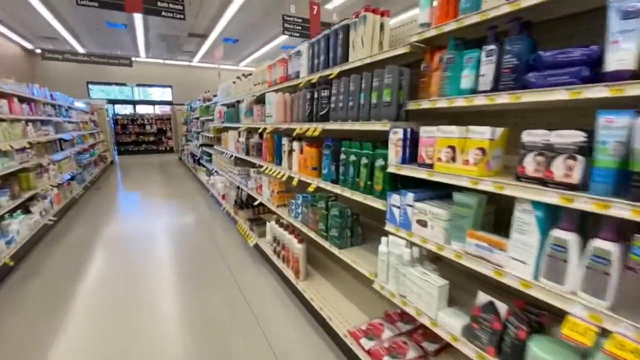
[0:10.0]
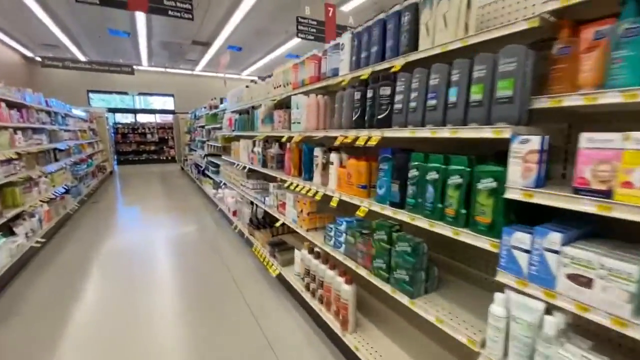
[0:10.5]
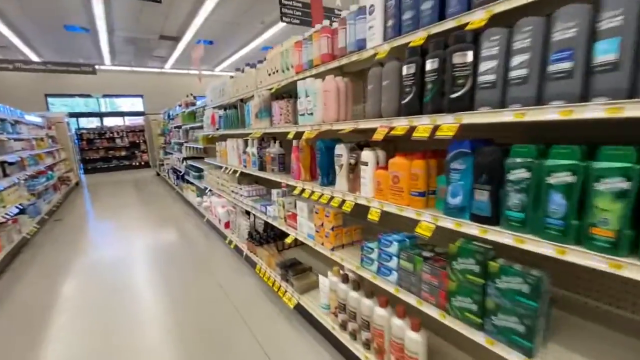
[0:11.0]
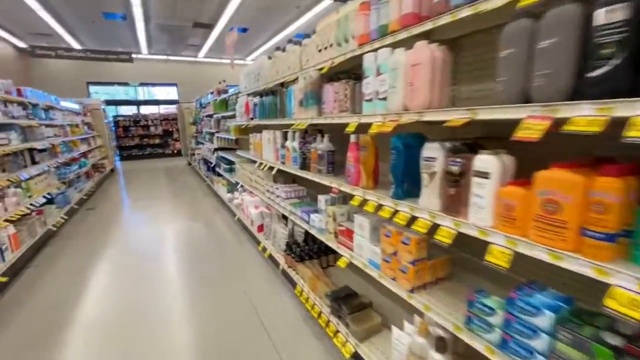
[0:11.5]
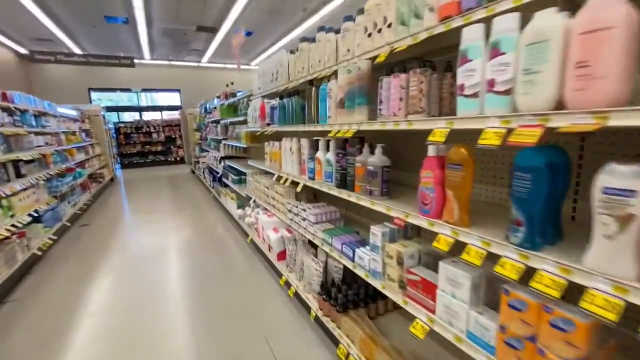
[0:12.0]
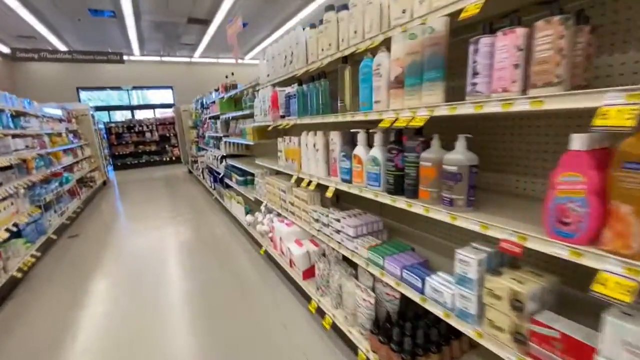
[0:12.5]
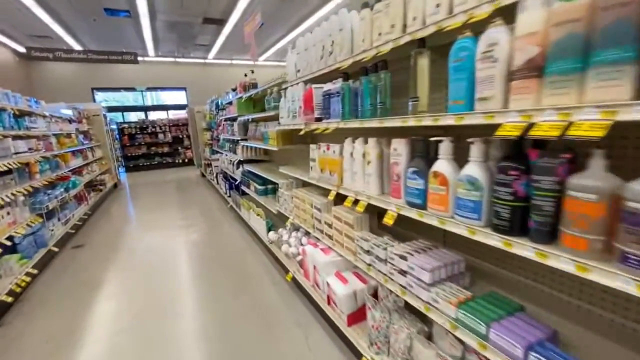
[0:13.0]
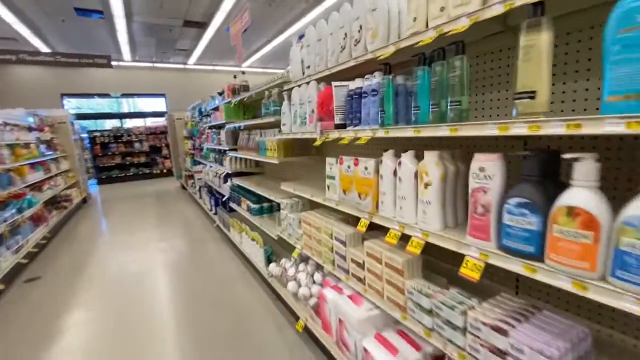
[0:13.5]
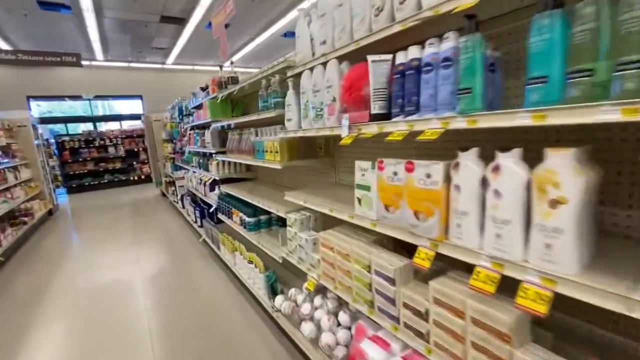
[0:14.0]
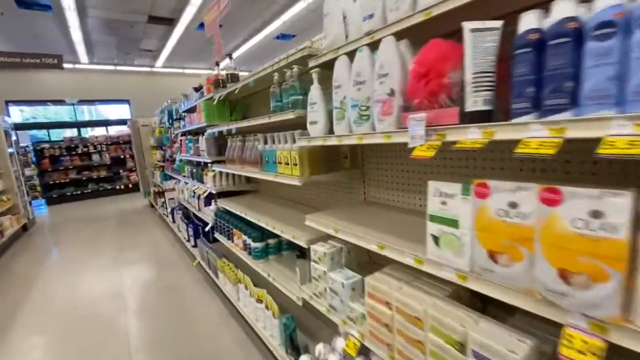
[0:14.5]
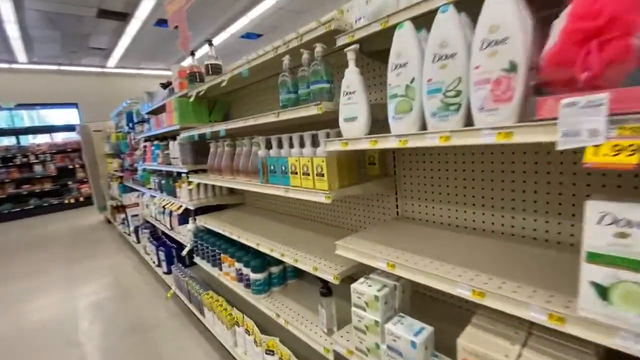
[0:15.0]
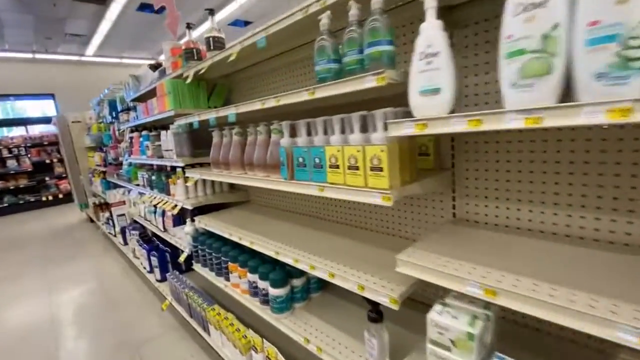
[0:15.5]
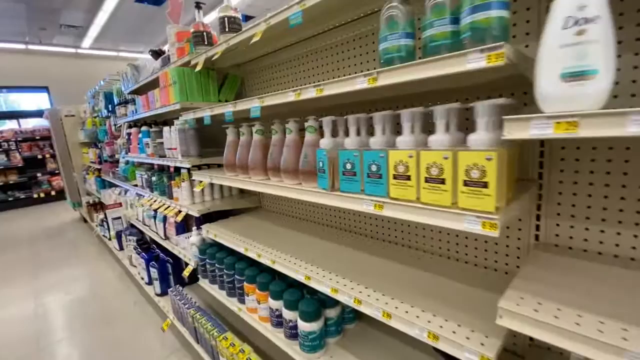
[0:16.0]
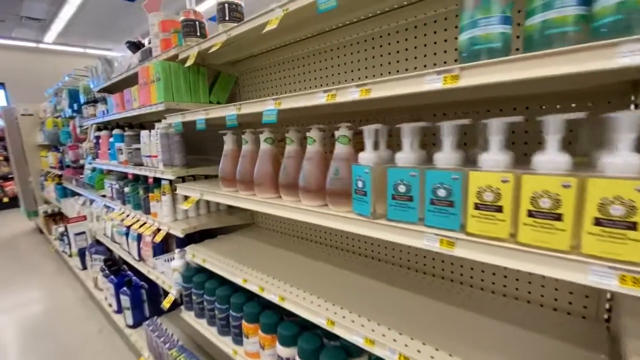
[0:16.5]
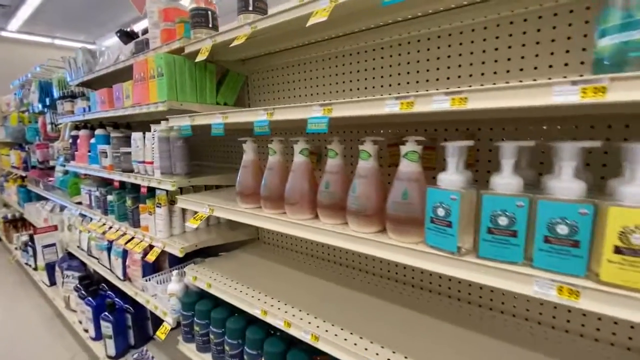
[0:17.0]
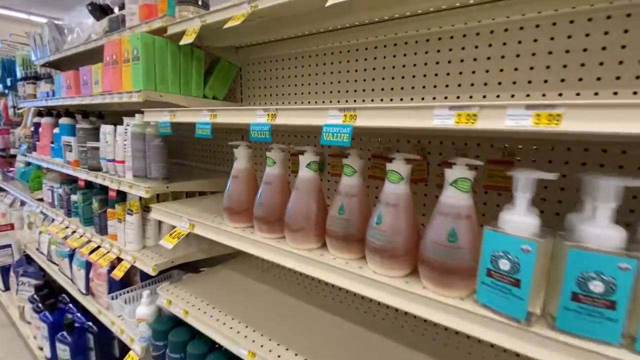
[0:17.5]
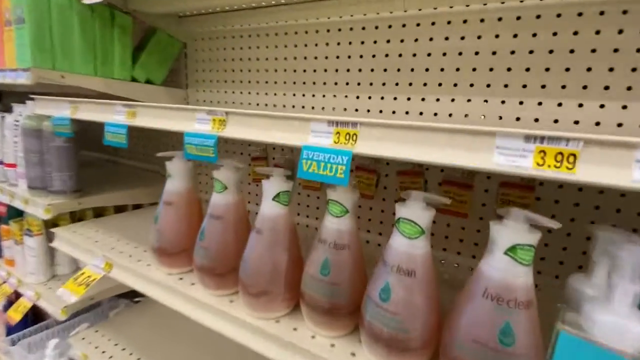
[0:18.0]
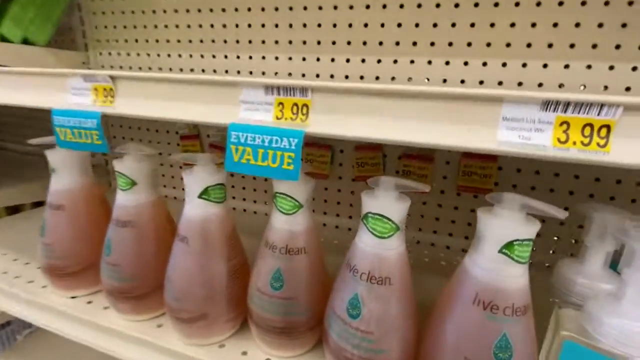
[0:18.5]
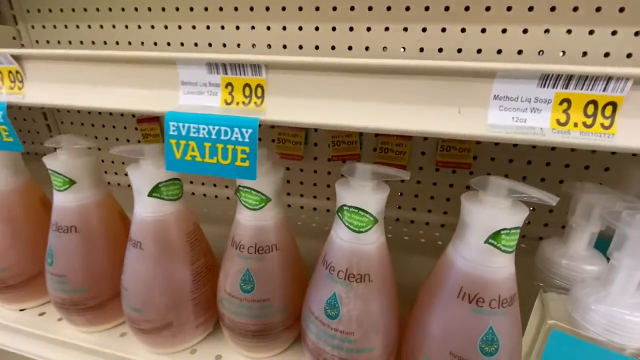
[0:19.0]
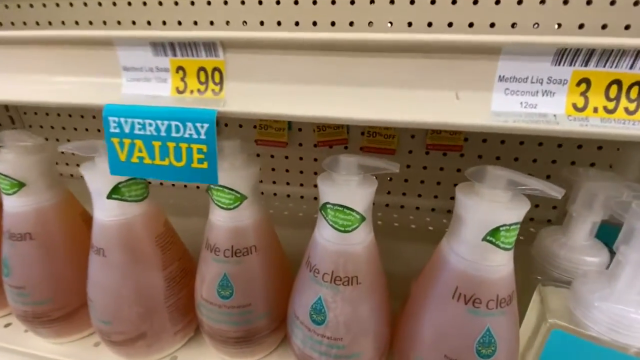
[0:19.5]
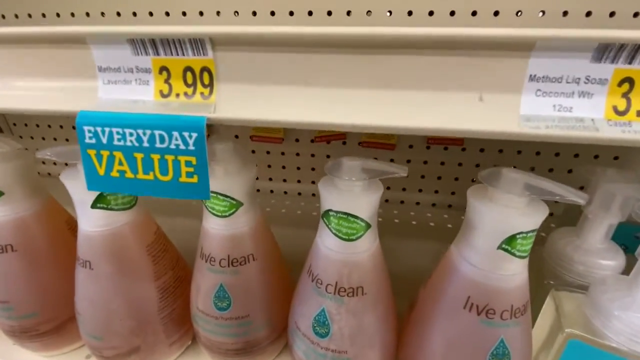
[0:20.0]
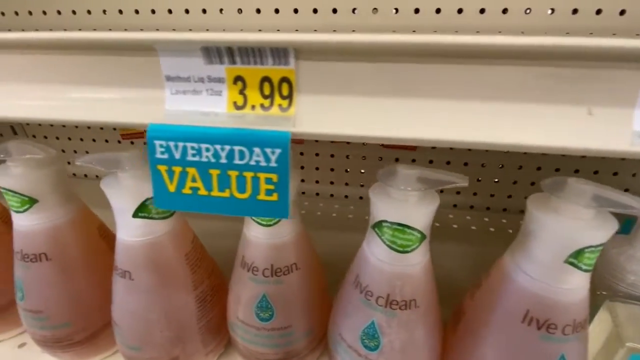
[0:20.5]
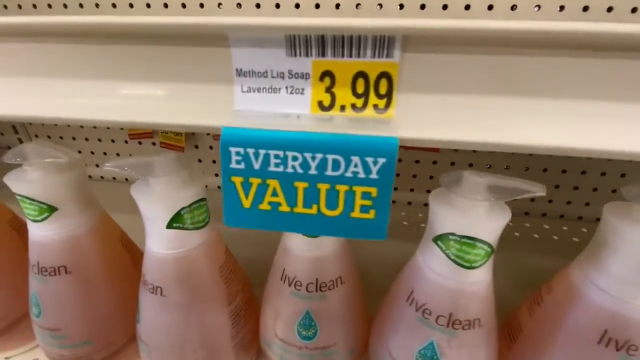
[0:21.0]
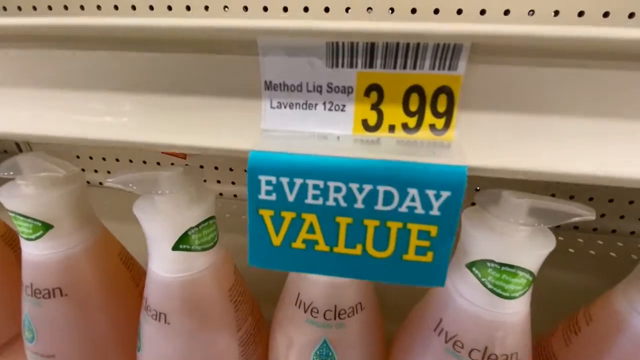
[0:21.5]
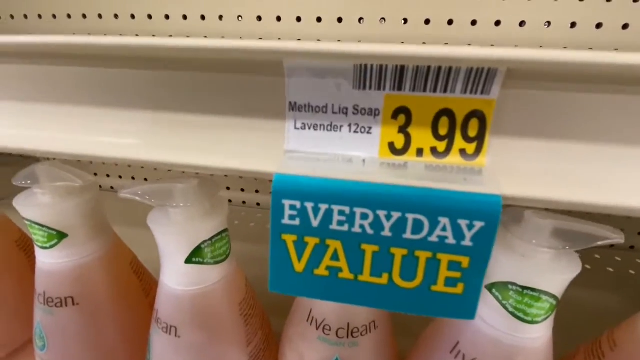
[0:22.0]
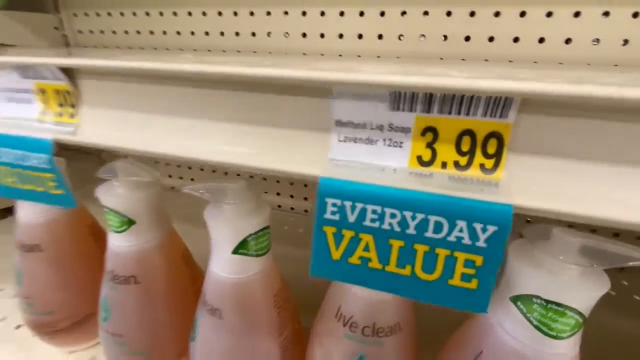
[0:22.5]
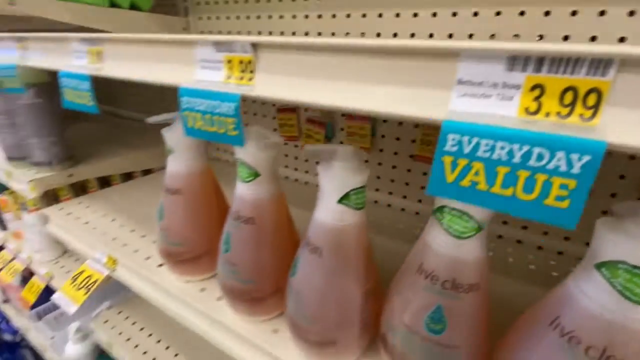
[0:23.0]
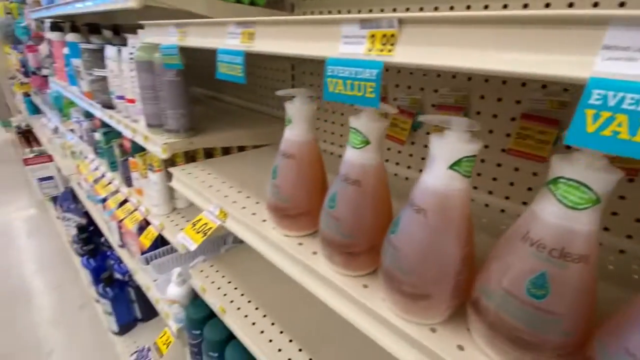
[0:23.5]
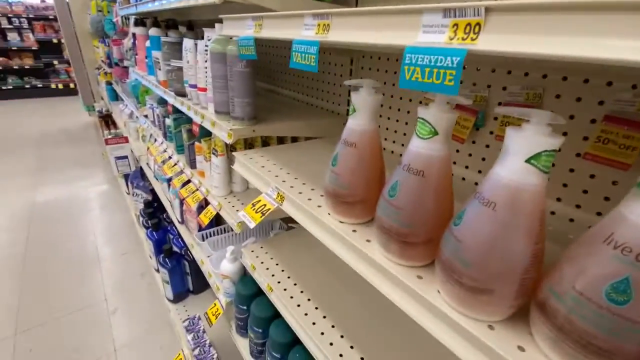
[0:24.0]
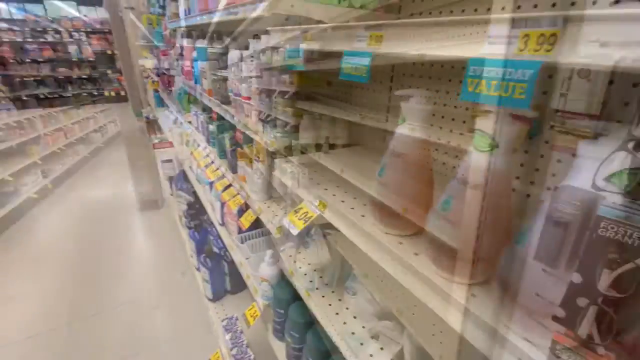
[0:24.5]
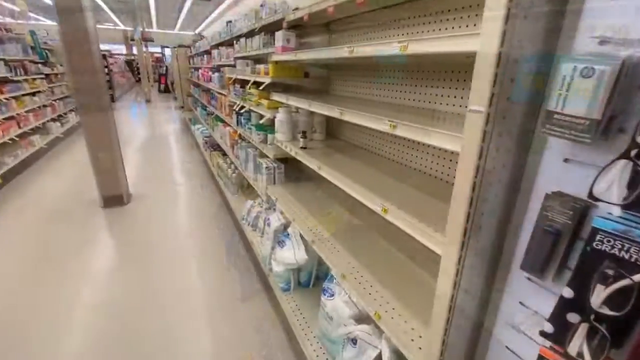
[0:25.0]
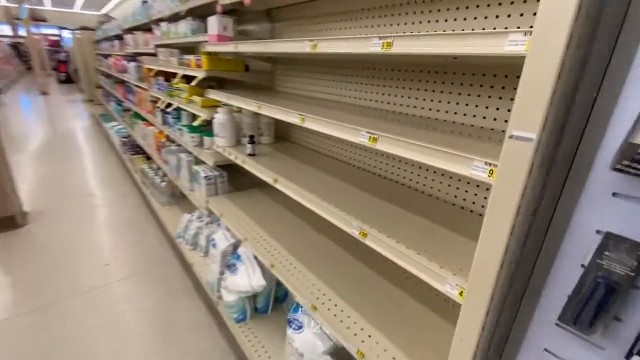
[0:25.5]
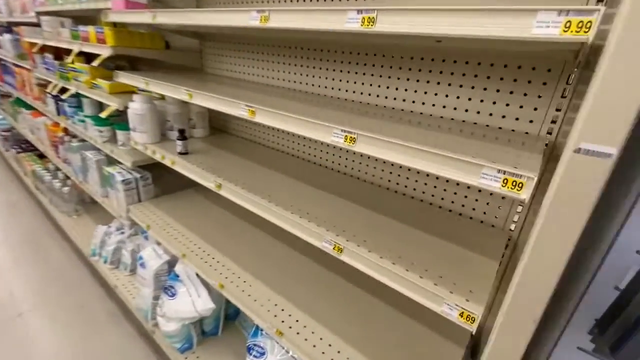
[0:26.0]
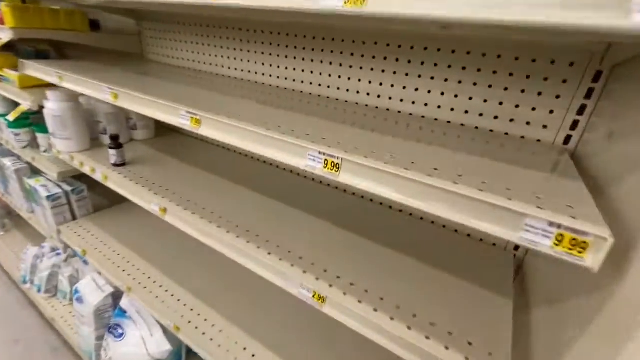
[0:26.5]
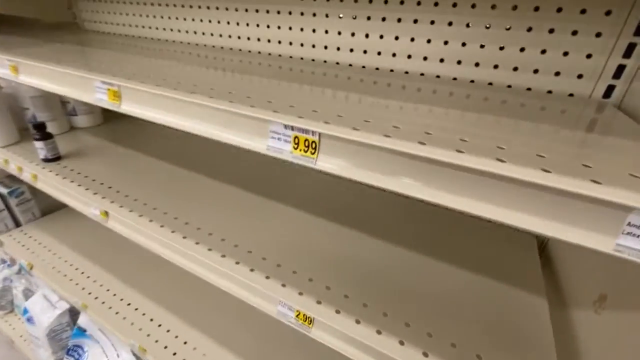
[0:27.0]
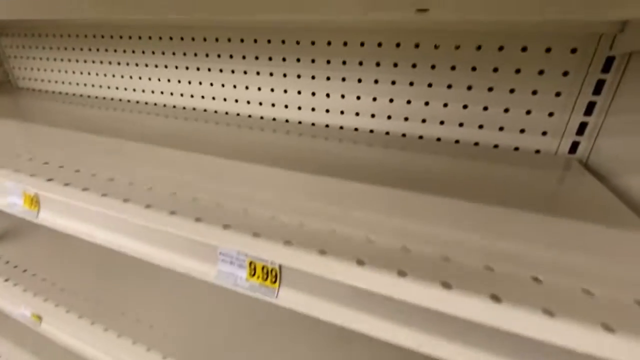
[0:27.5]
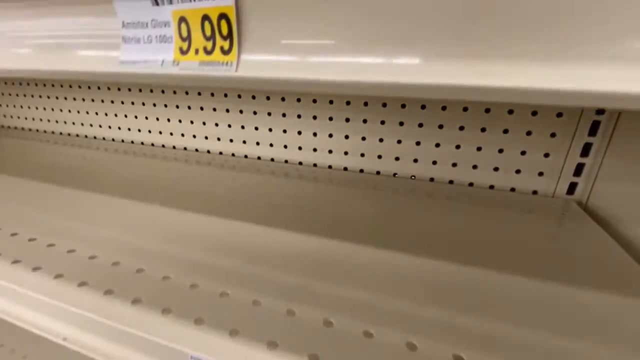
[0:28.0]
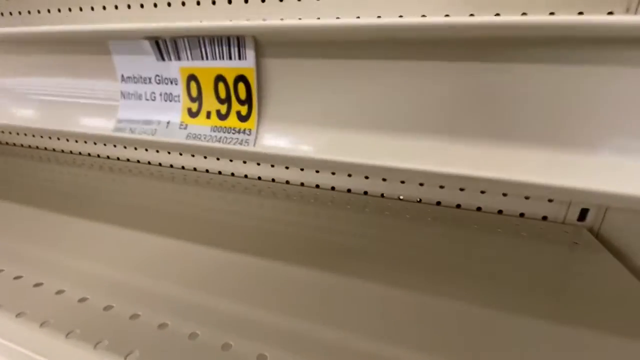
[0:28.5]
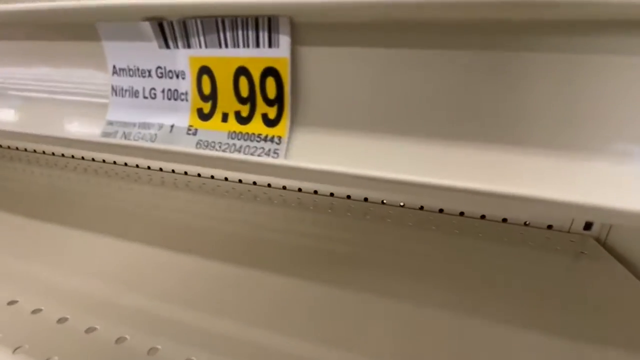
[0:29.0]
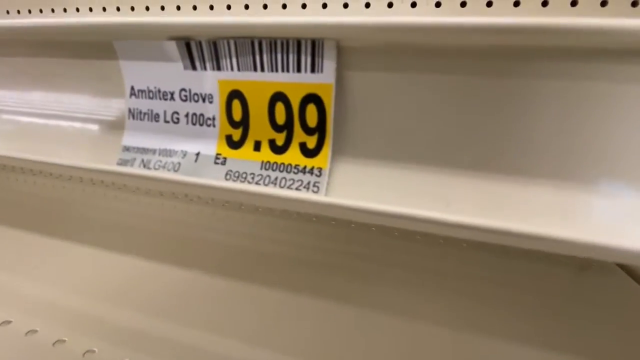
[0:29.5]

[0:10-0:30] The shelves appear to hold deodorant, shampoo, hand soap and bottles, with an "everyday value $3.99" price for soap. One kind of soap is not available, and about 3 or 4 shelves are empty. The camera moves toward some kind of gloves, possibly "ambidex" or similar, for $9.99. There are about 4 shelves along this aisle, holding a lot of cleaning products, mostly personal cleaning products such as soaps, shampoos and hand soap. On the left side of the aisle there are apparently 4 or 5 rows of shelves, but their contents cannot be made out because the camera focuses more on the right side. At the end of the aisle there looks to be a door with a window to another area, hard to make out in the distance.